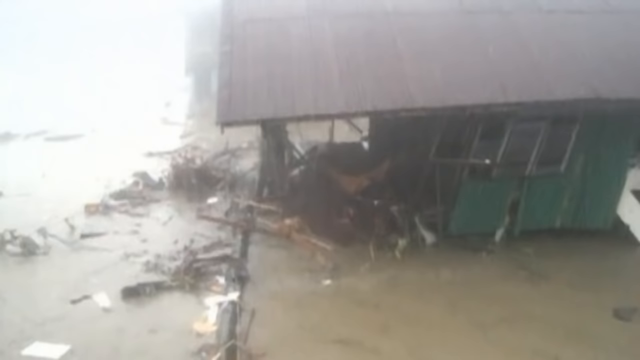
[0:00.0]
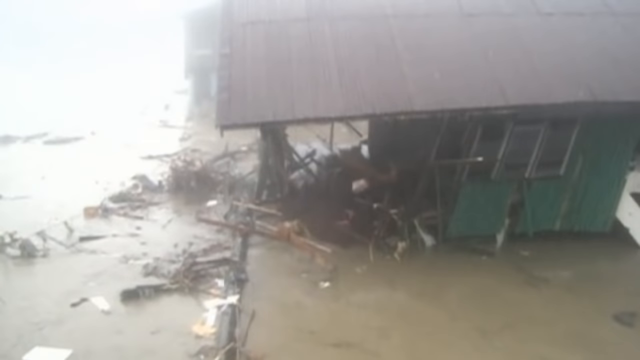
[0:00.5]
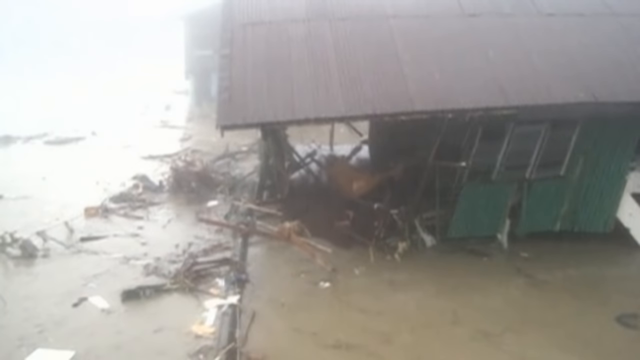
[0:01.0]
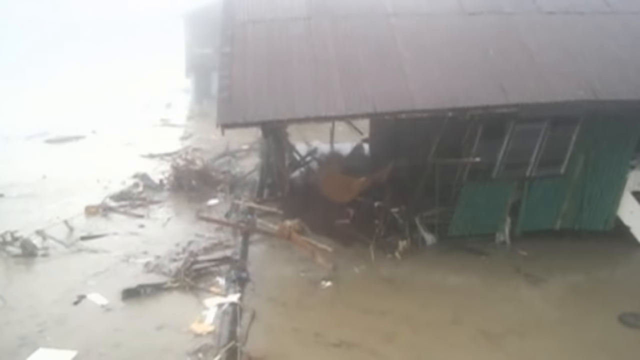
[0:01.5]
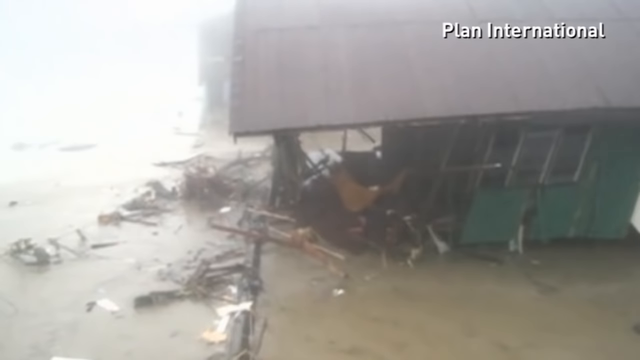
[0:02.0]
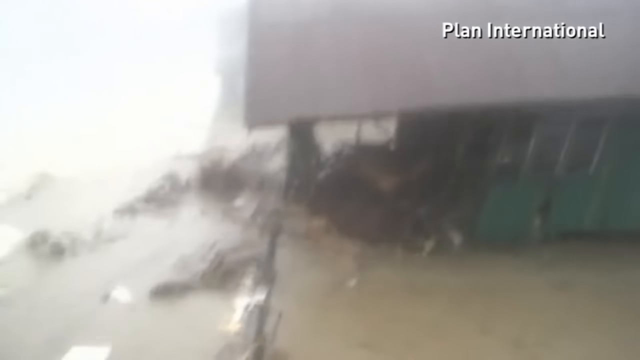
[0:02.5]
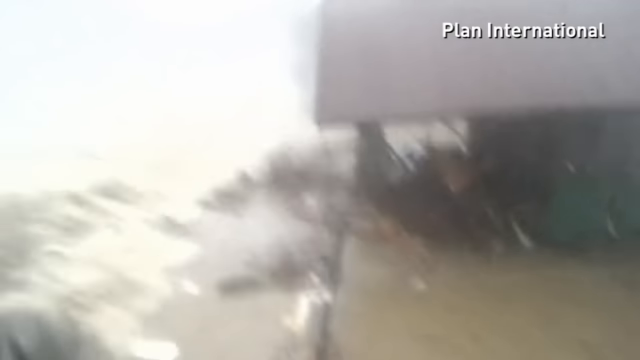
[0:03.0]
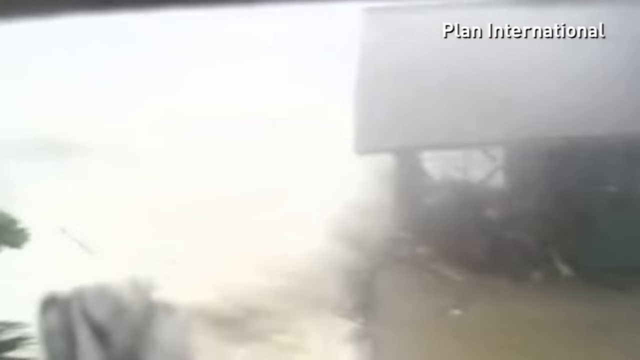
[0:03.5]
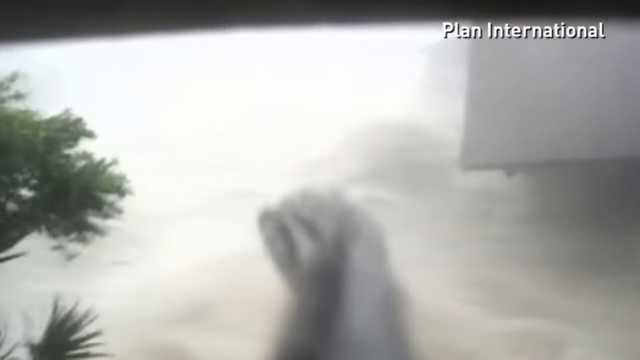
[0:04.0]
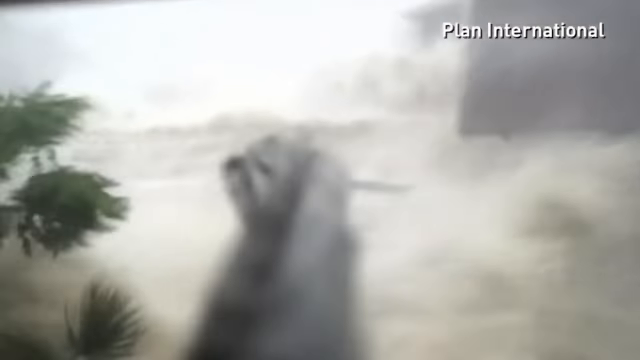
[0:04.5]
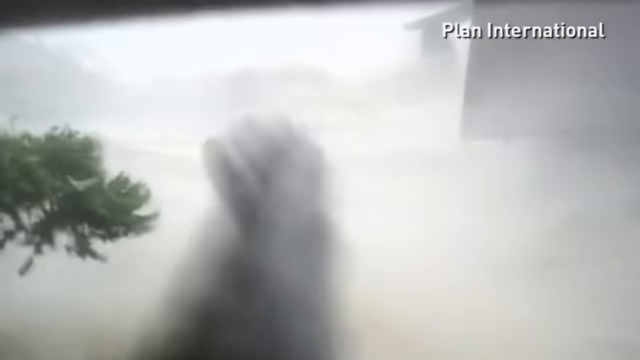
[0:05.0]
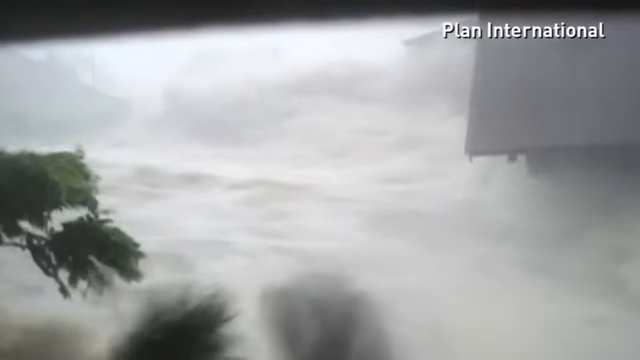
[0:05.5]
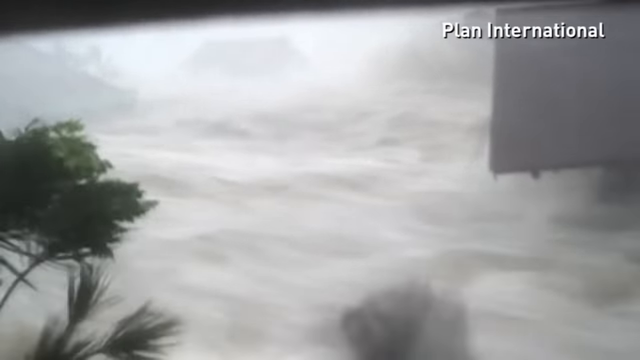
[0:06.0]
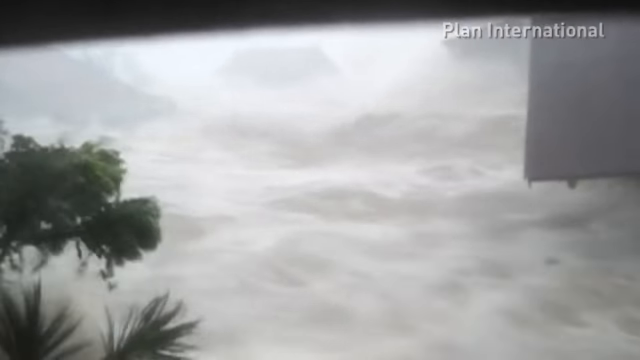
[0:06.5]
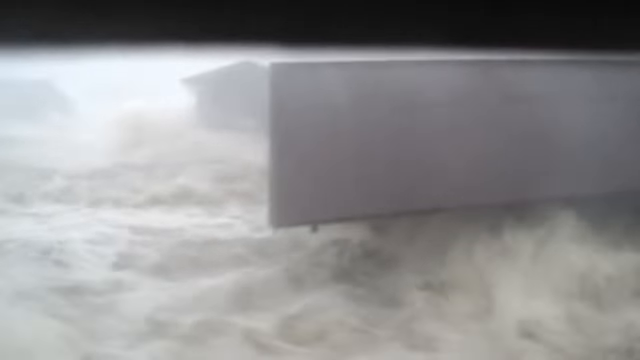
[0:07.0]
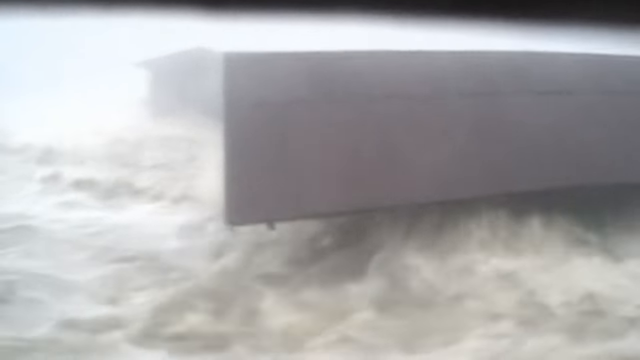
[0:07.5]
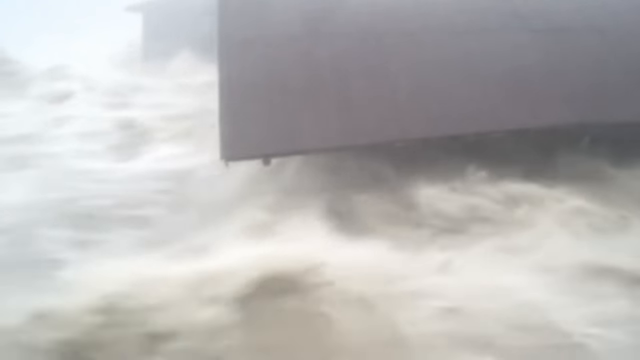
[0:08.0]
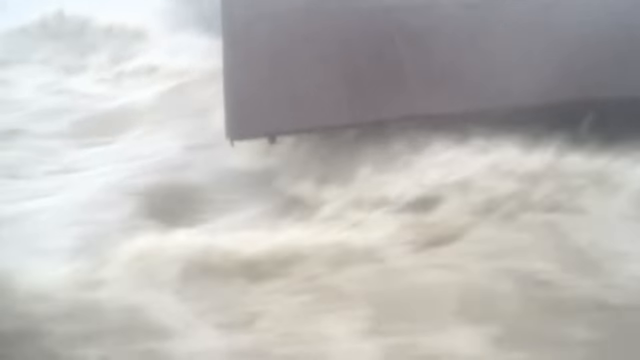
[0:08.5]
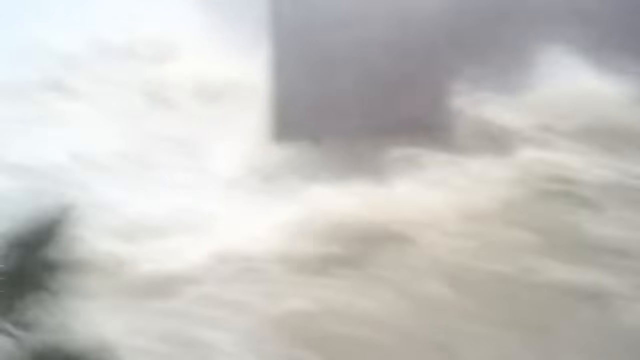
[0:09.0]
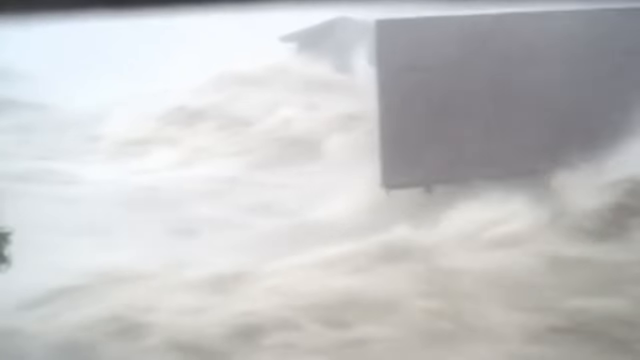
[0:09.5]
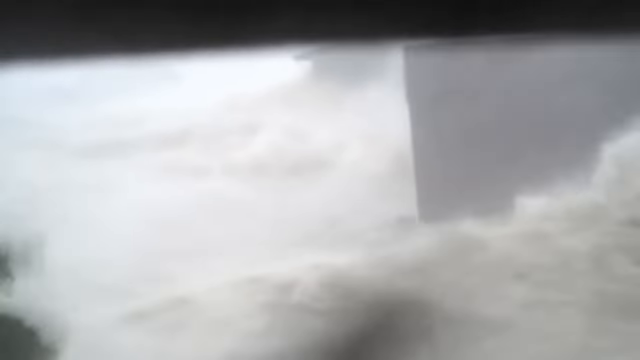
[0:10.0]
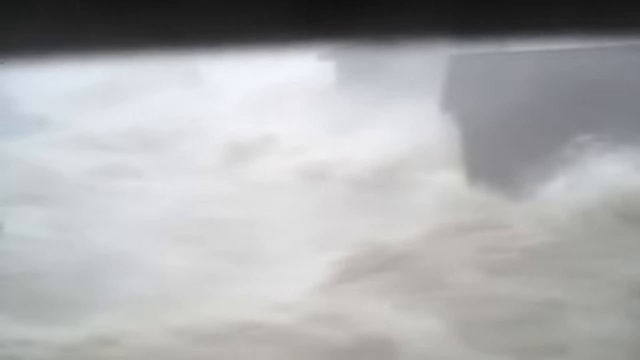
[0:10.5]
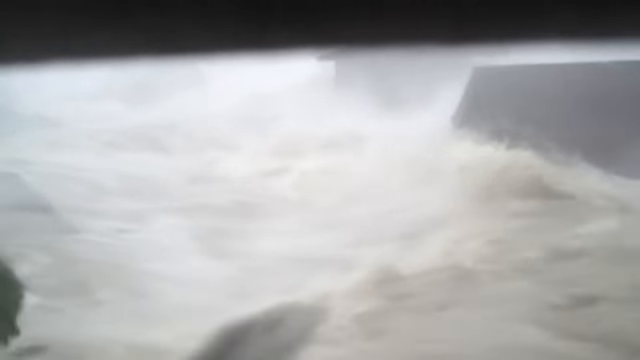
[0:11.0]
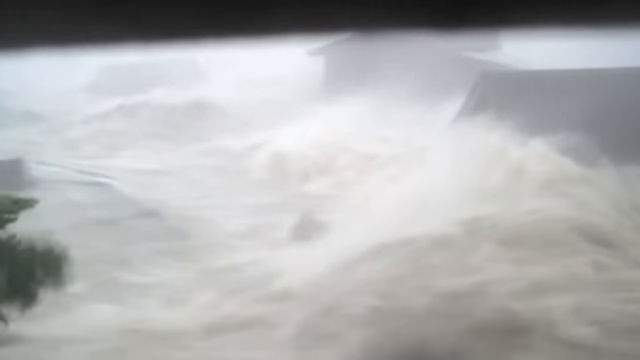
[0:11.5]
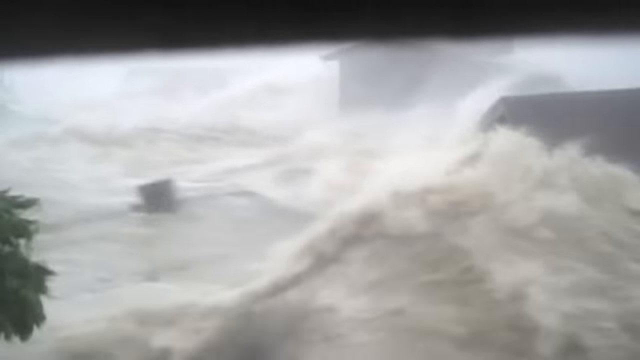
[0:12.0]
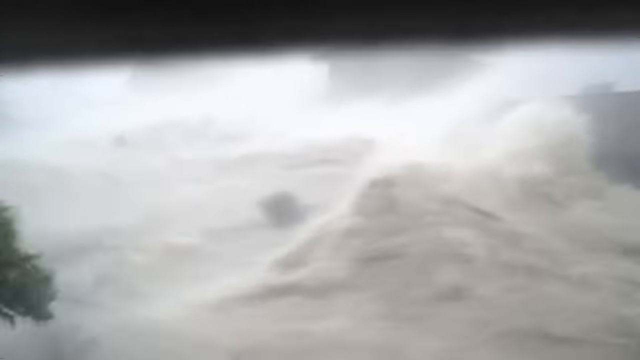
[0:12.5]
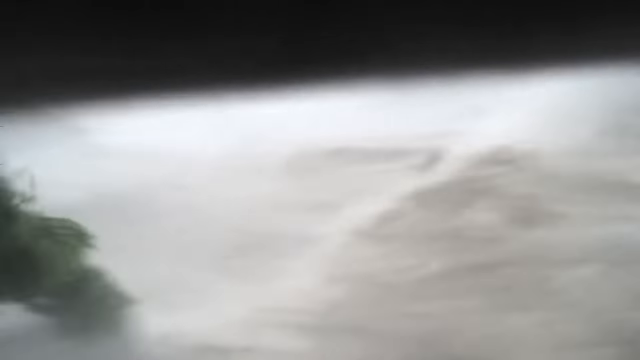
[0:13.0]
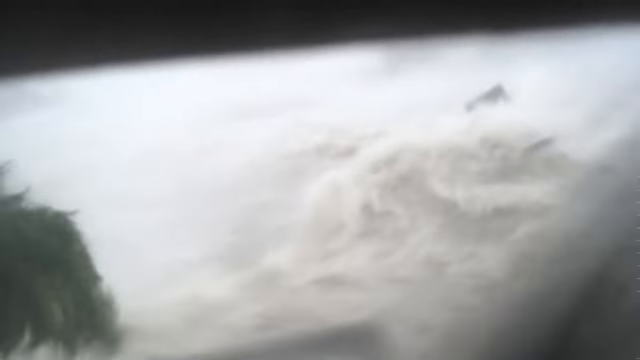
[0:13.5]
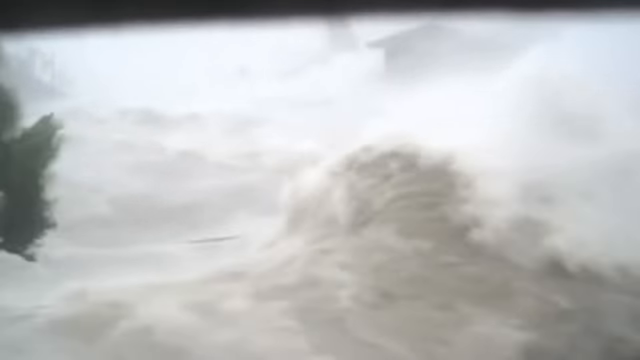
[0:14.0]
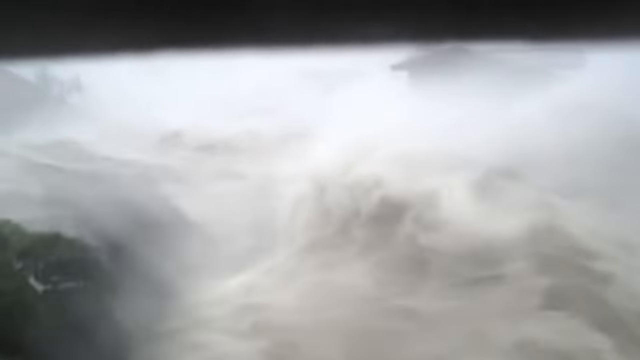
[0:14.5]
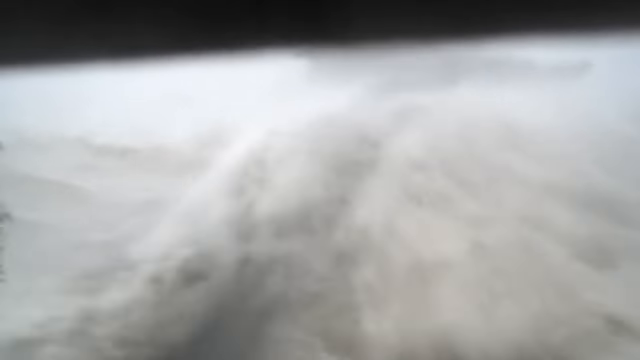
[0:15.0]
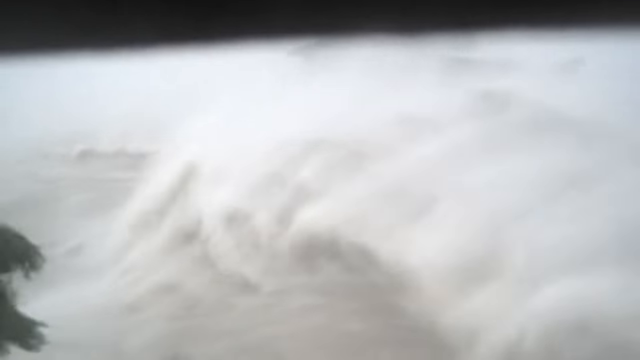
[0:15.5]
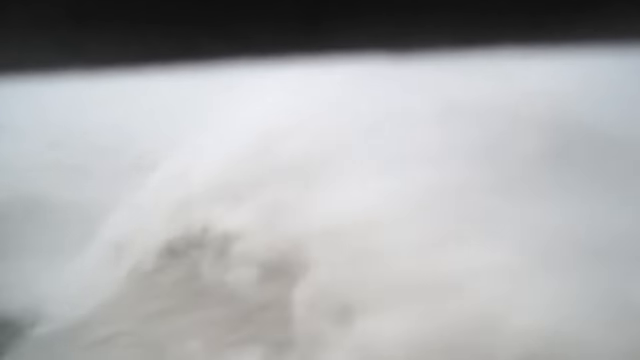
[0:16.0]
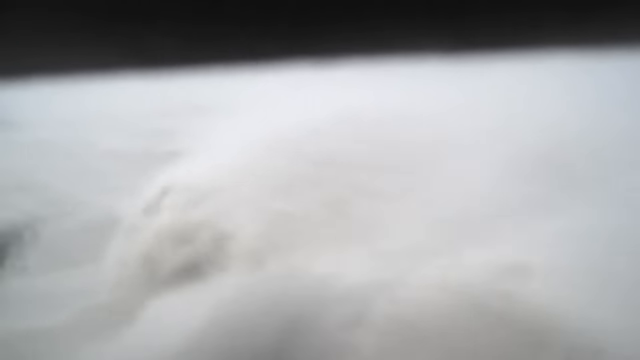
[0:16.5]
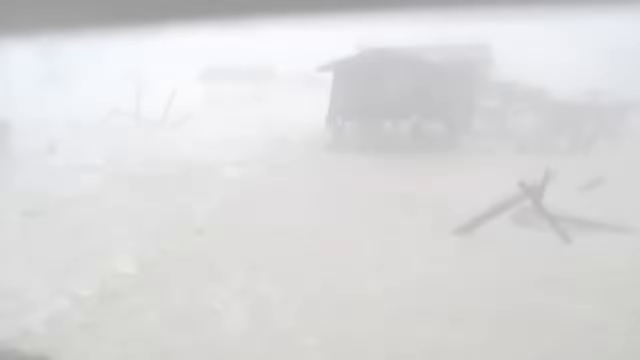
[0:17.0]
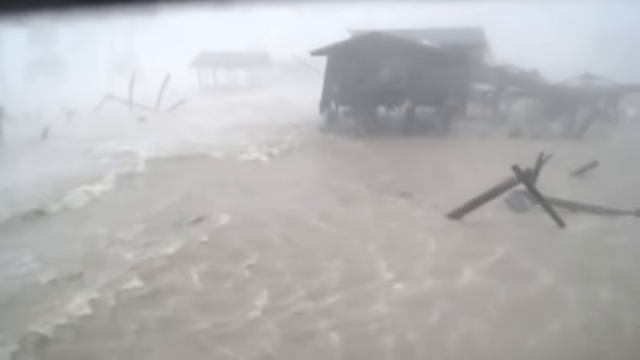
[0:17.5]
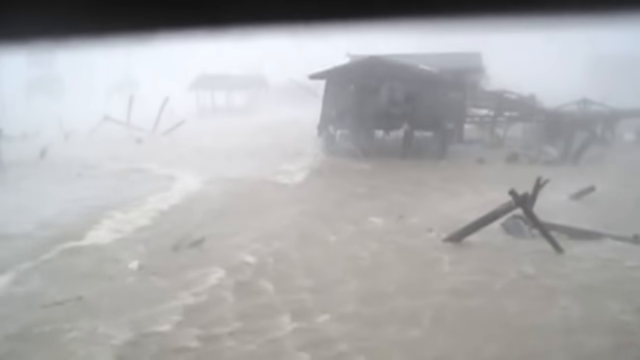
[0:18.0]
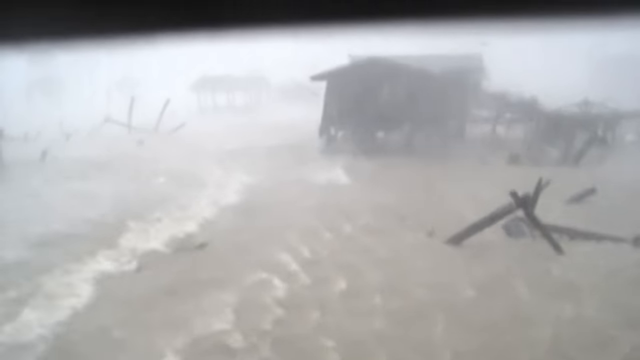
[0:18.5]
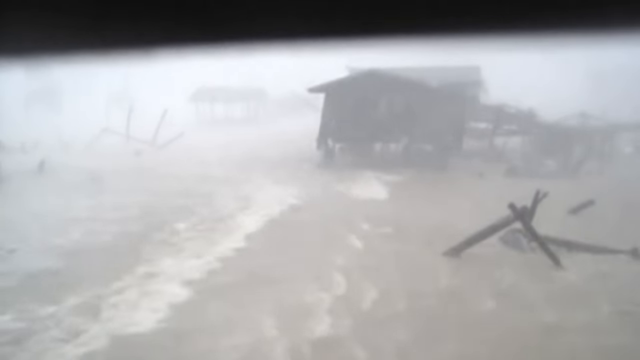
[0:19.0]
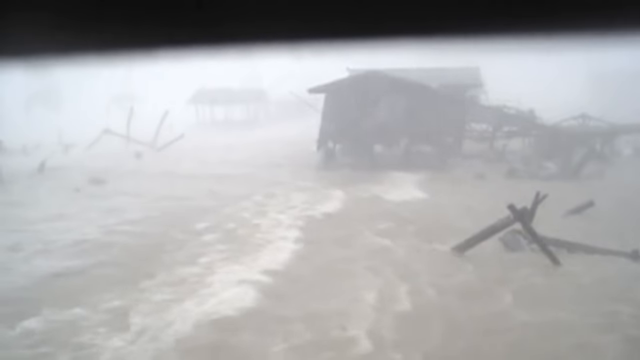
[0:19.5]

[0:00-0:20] A greenhouse appears to be already half destroyed by a strong, dangerous storm. Strong wind blows the trees from side to side. A lot of water gushes and runs toward a house until the house is covered and only its roof can be seen. The house has a brown roof that looks rusty, making it look like an old house. The water keeps coming until the house is fully covered. Meters away from it, another house is underwater, with only almost a quarter of it, almost just the roof, visible. There are a lot of sticks and wood, possibly trees broken by the storm.